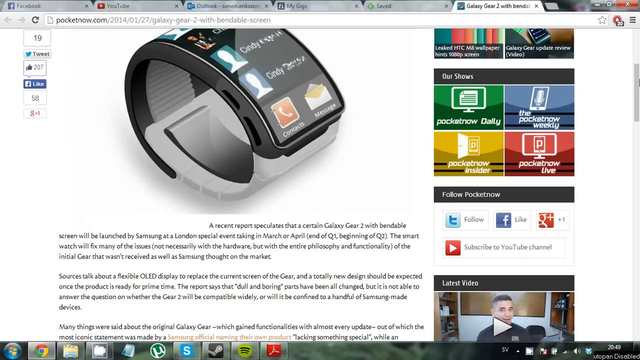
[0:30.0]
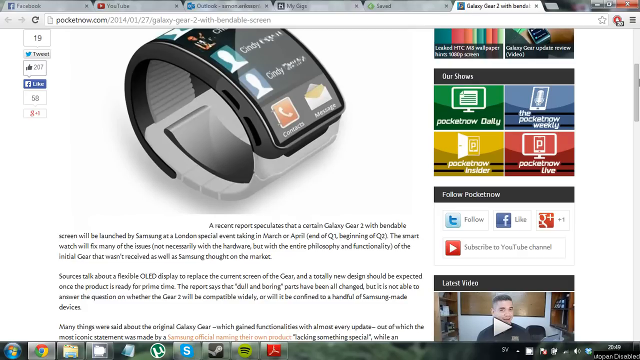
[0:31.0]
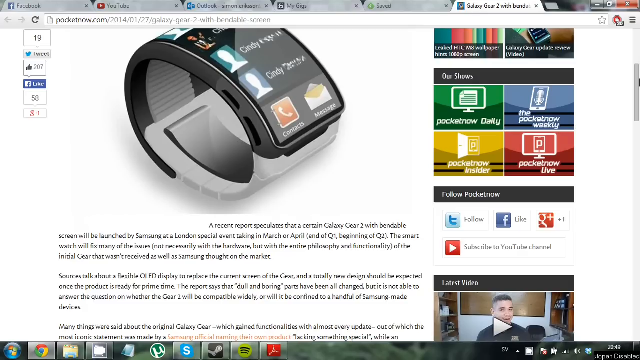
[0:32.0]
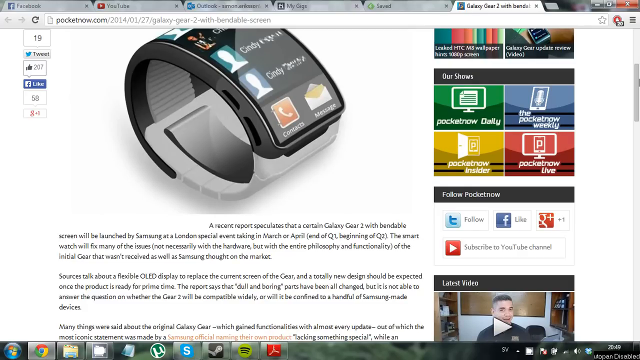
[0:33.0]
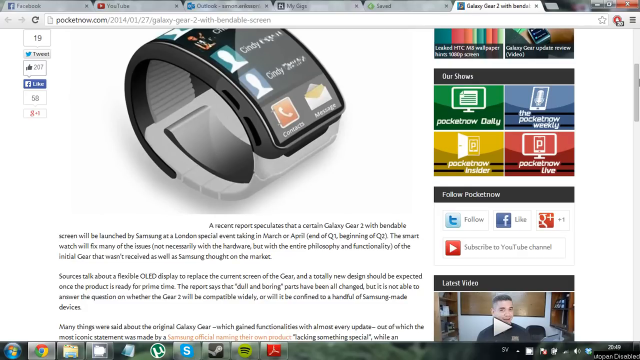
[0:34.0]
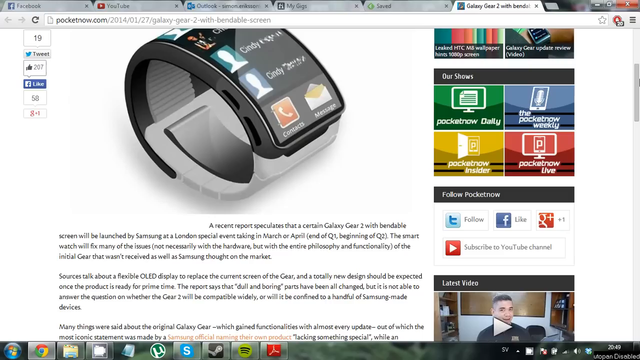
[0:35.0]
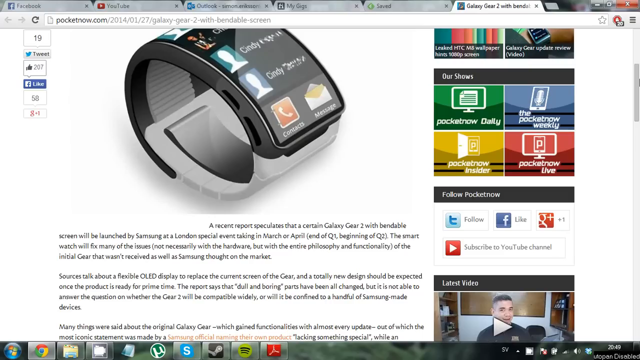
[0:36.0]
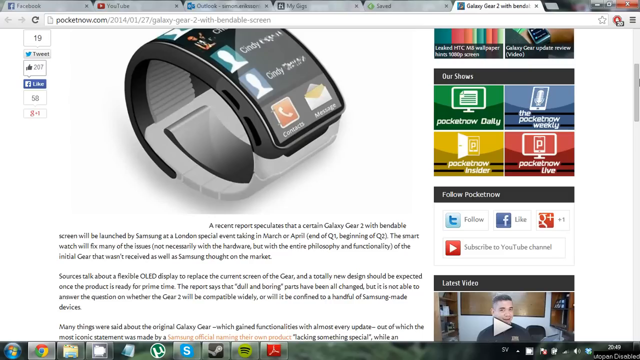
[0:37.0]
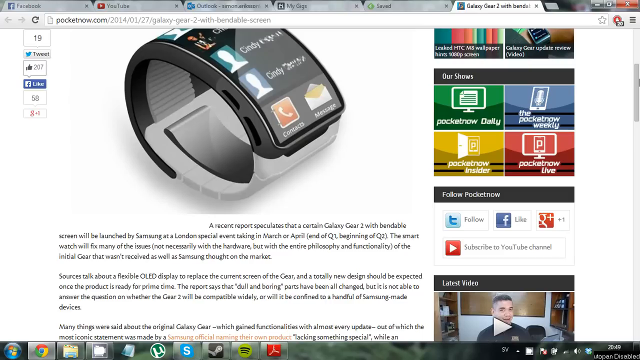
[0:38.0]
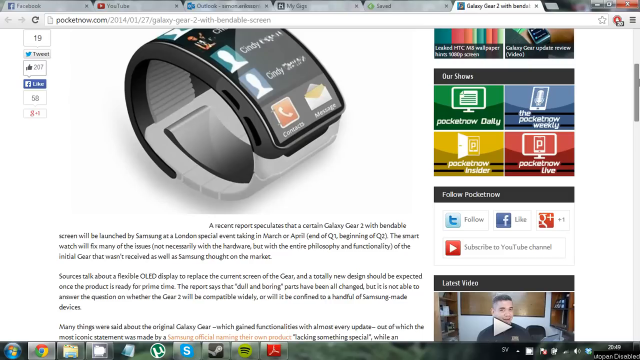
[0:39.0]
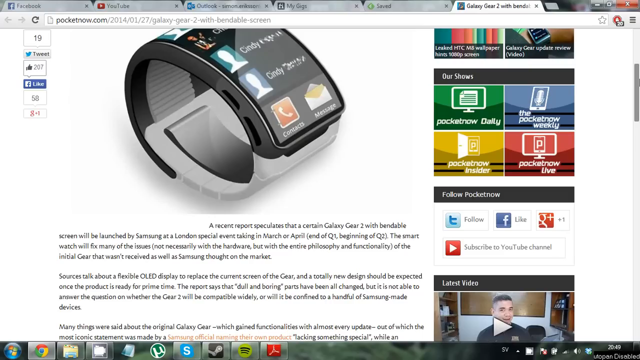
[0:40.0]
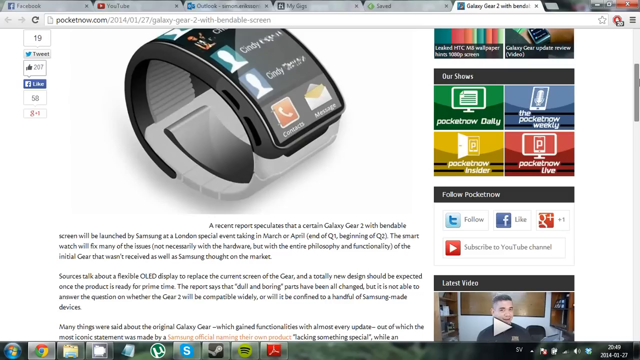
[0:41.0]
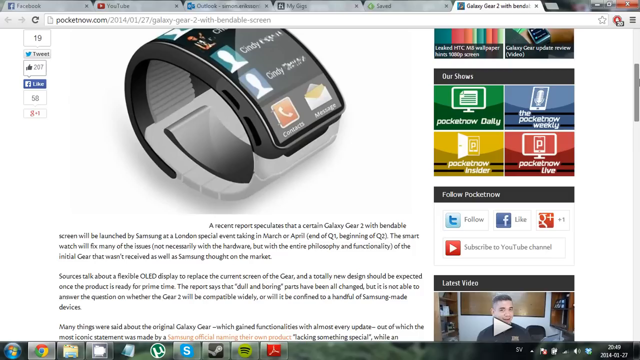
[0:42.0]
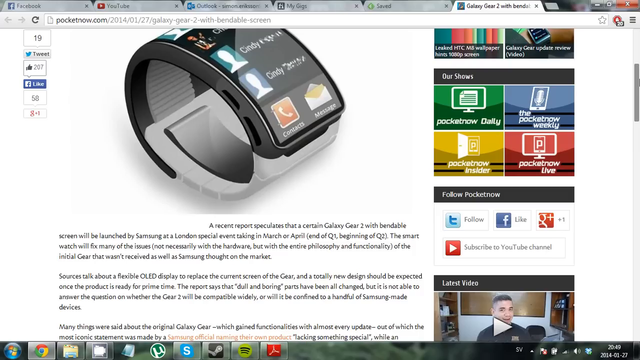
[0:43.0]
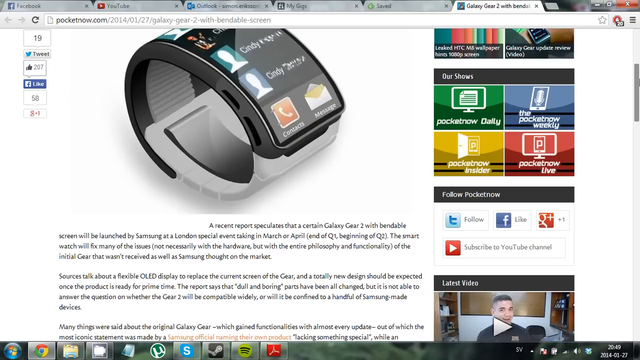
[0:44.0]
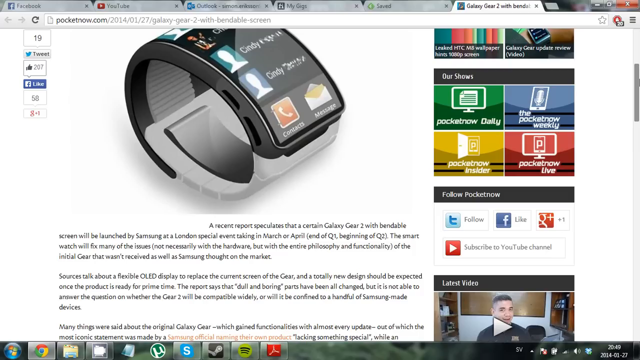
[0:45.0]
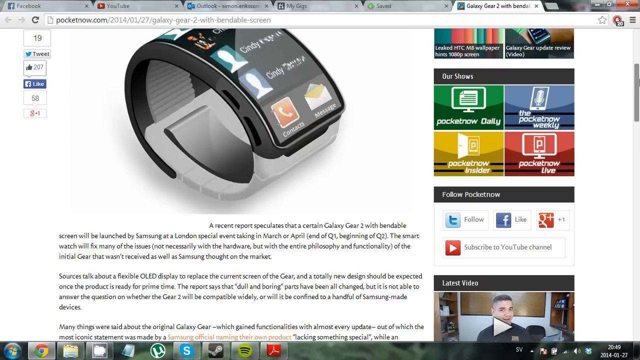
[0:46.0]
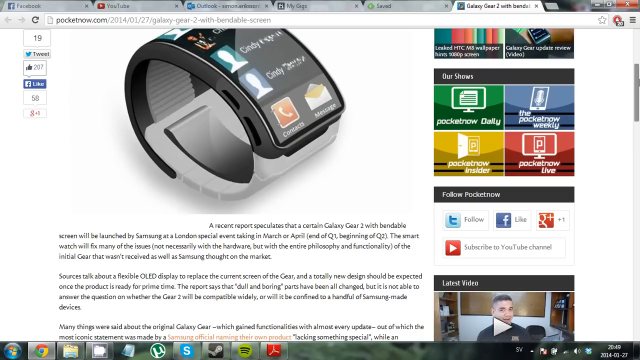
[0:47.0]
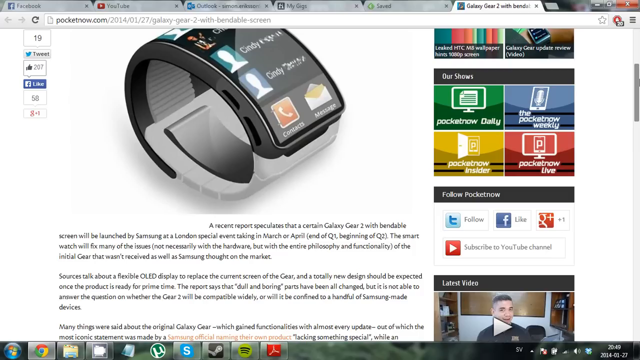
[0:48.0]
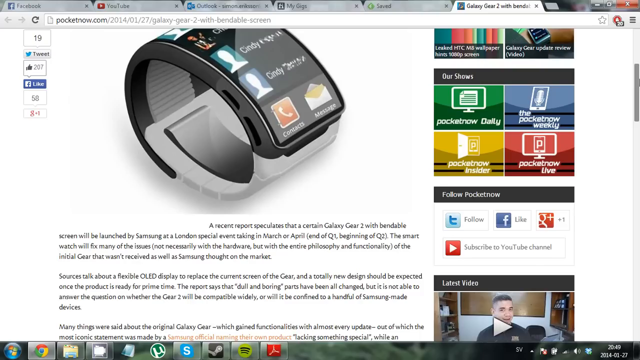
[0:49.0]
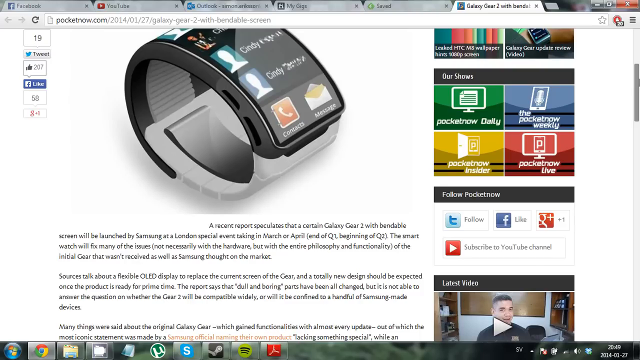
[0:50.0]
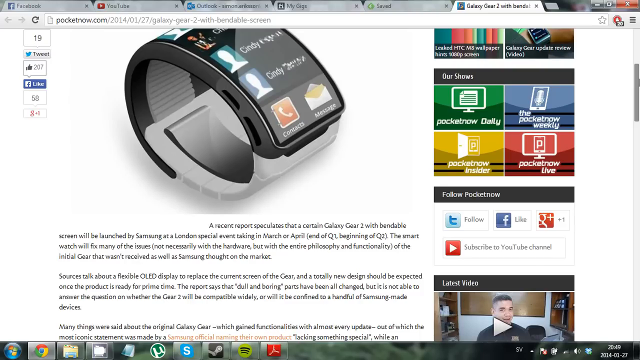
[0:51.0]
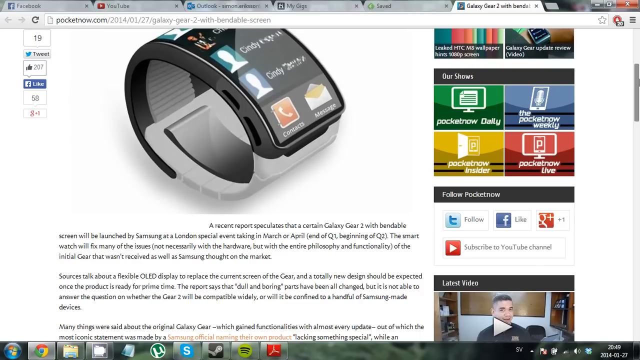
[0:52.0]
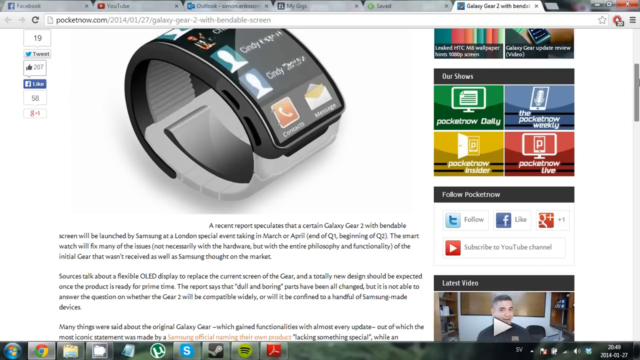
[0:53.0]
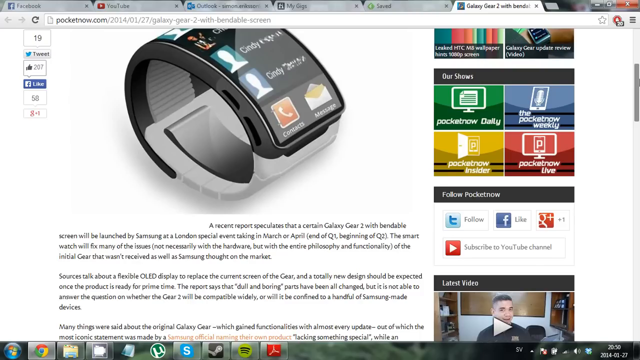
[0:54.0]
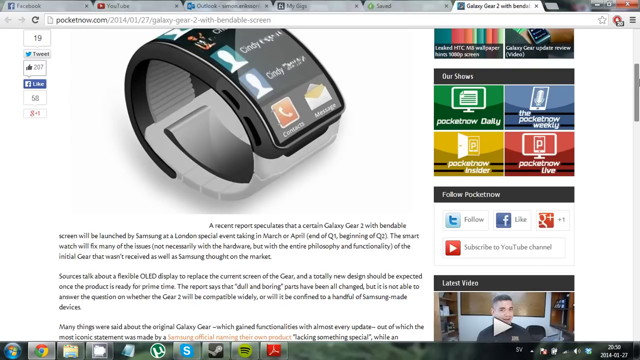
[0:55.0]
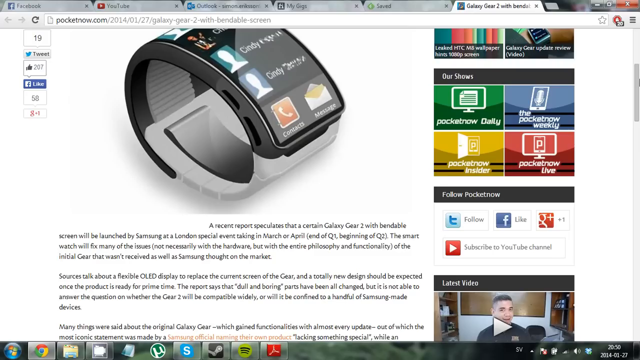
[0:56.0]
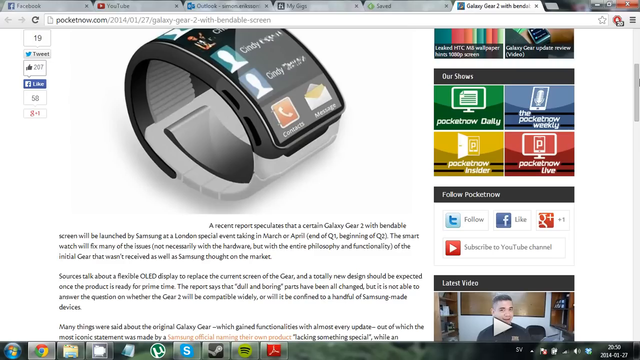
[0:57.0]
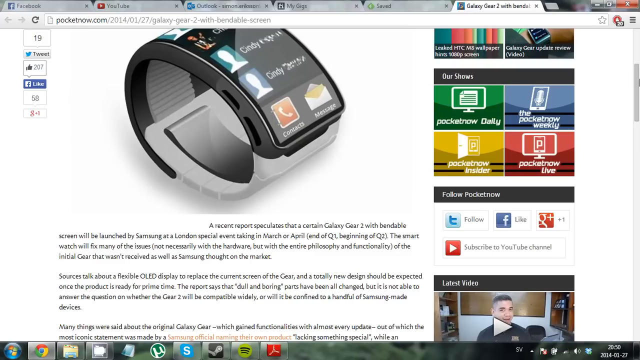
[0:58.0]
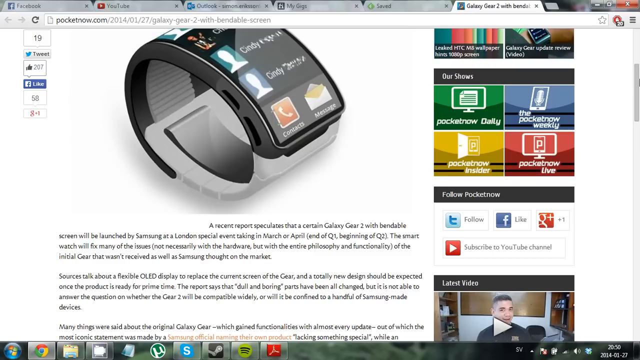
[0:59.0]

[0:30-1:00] The video shows only the smartwatch. A calling picture, a message picture and a number are on the watch. On the right side there is some information, but it is unclear and too small to read. It is not actually moving video but still pictures that show the watch and nothing more.